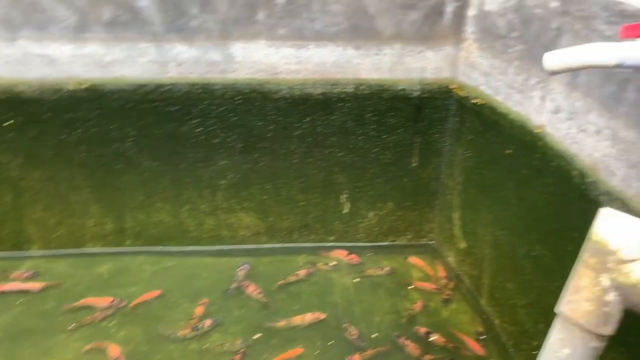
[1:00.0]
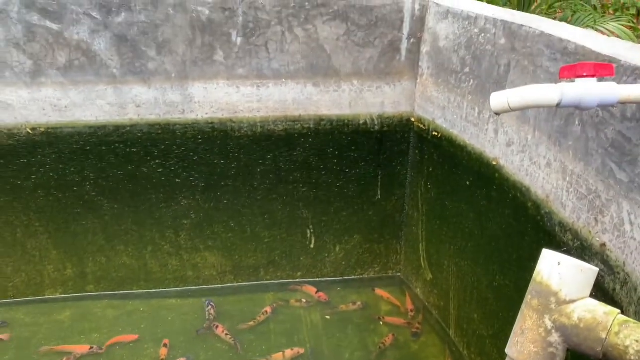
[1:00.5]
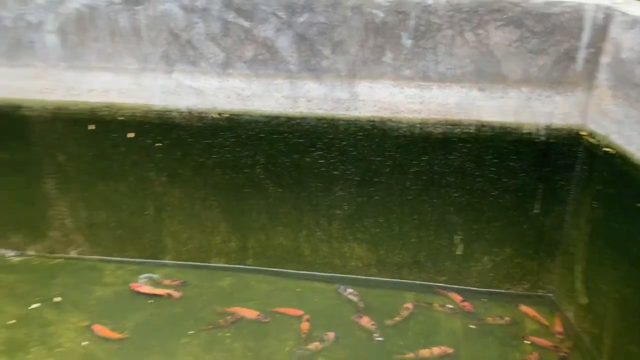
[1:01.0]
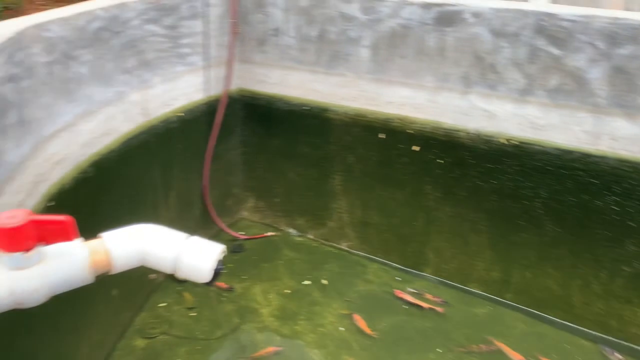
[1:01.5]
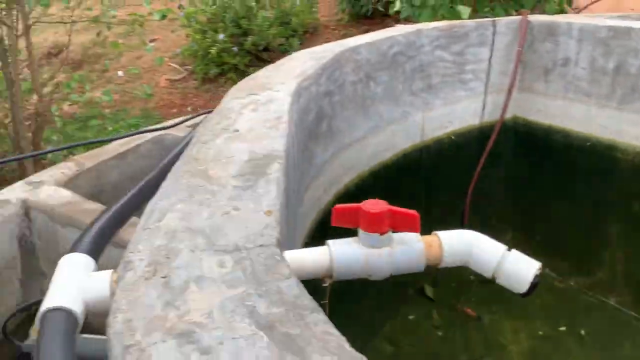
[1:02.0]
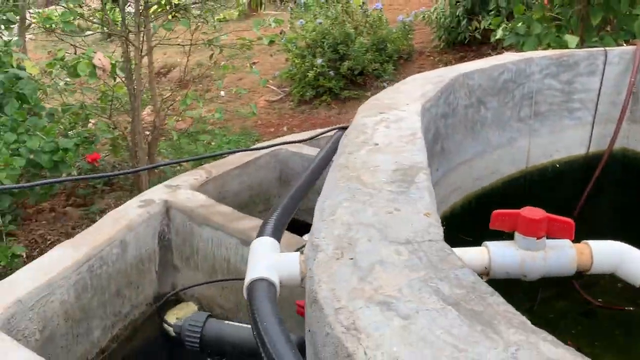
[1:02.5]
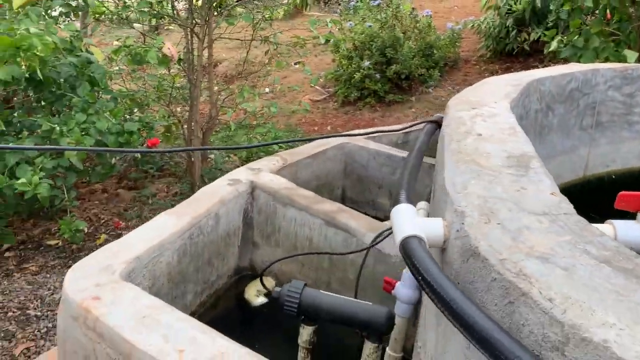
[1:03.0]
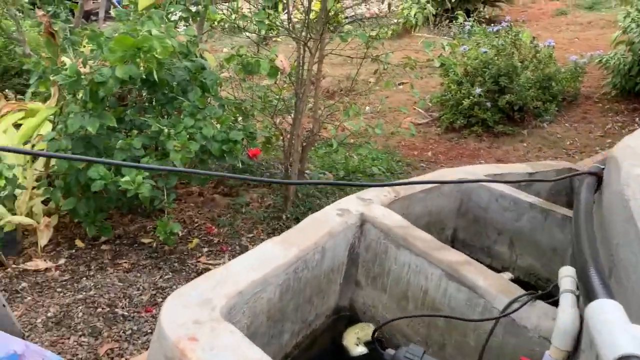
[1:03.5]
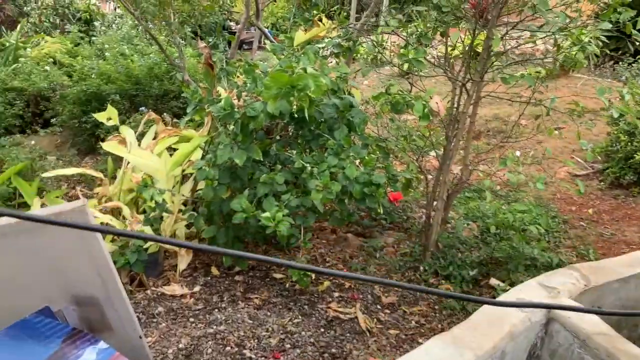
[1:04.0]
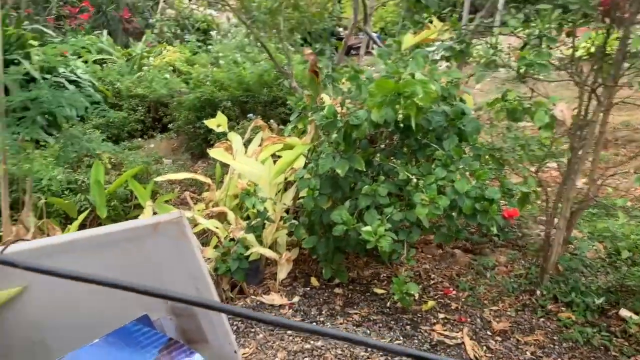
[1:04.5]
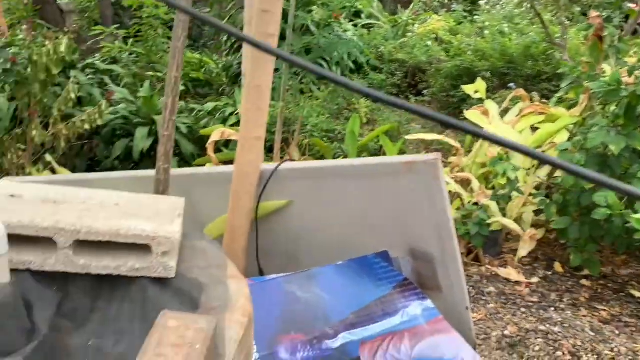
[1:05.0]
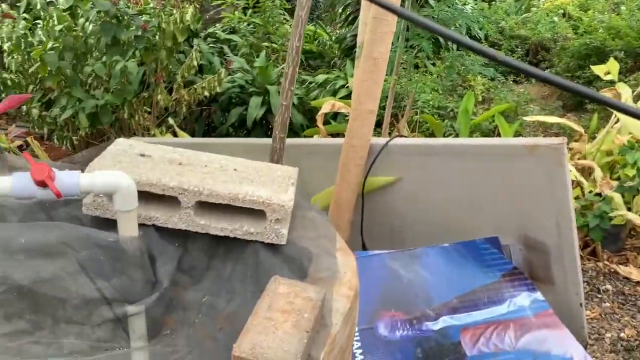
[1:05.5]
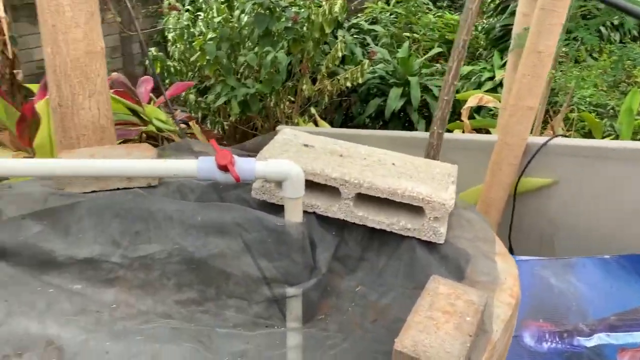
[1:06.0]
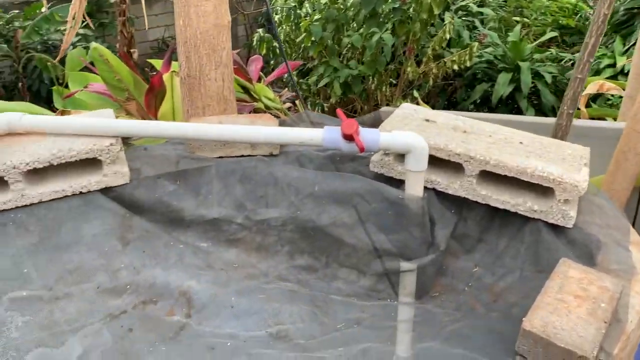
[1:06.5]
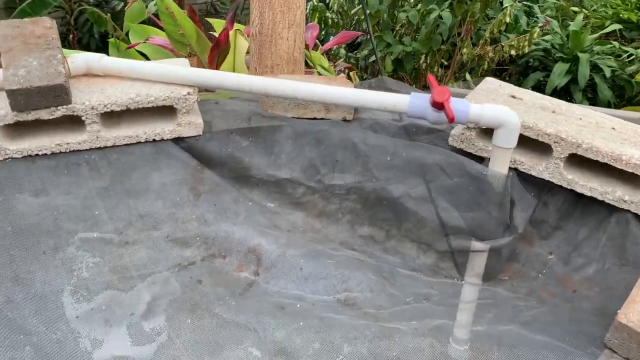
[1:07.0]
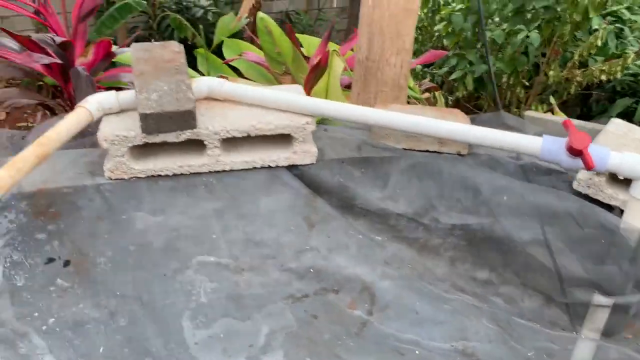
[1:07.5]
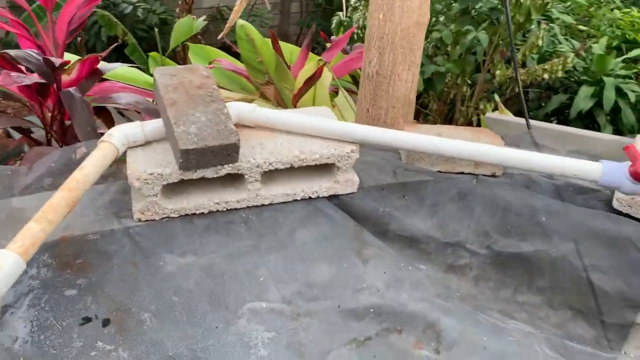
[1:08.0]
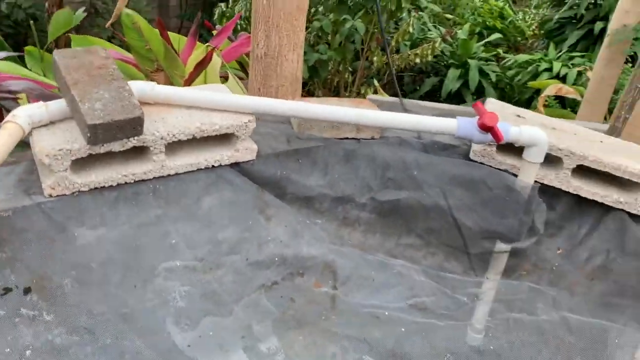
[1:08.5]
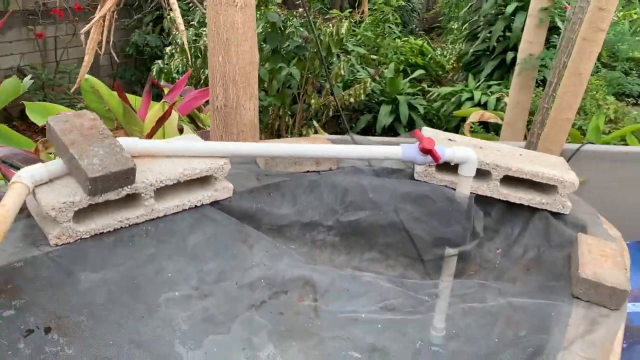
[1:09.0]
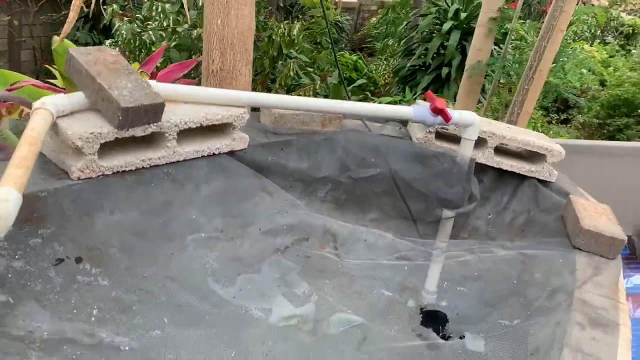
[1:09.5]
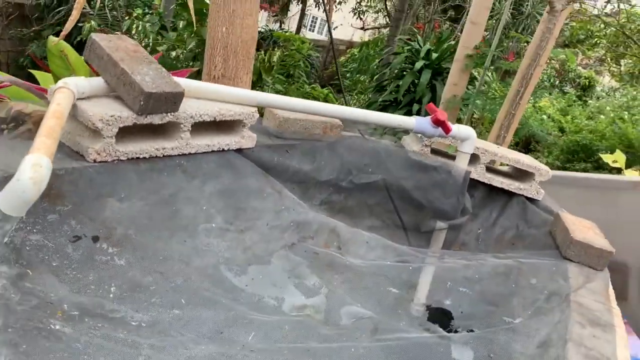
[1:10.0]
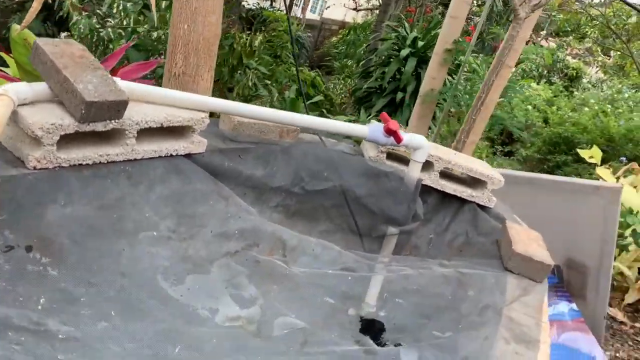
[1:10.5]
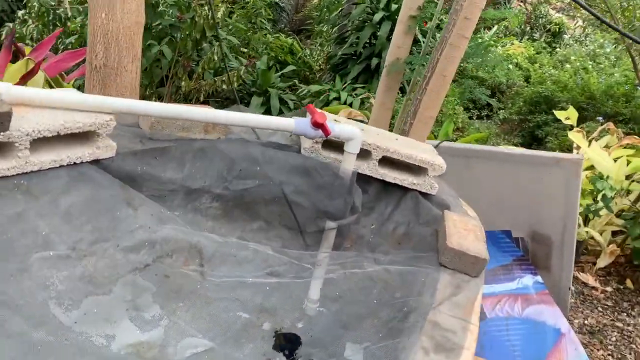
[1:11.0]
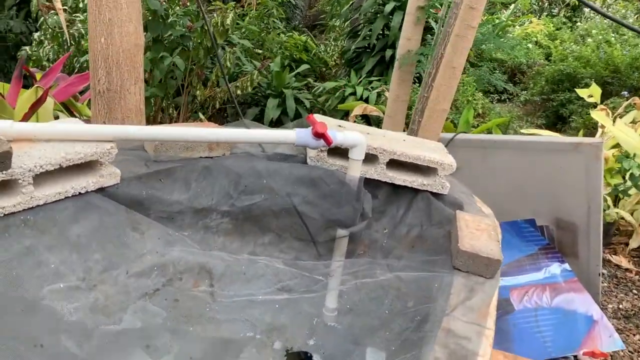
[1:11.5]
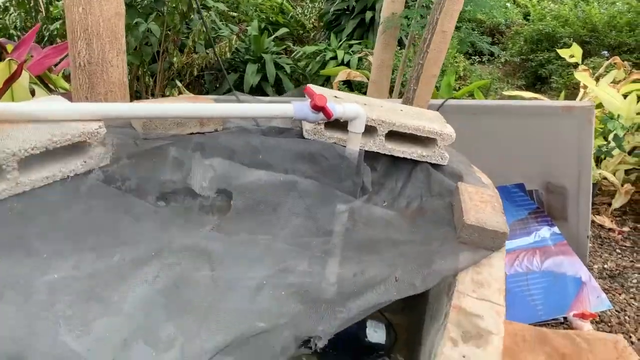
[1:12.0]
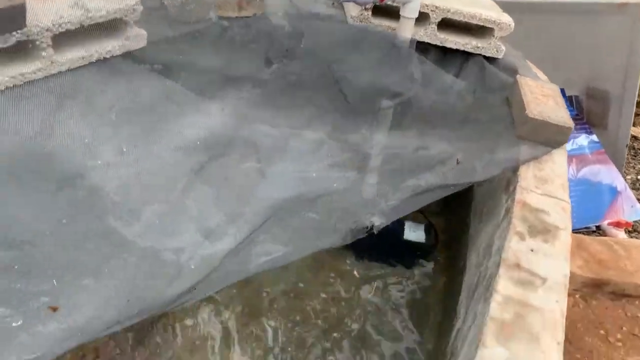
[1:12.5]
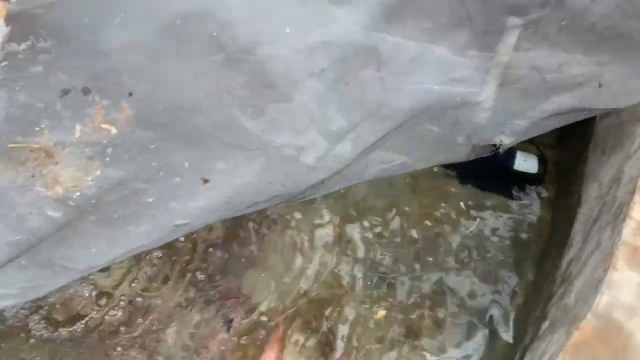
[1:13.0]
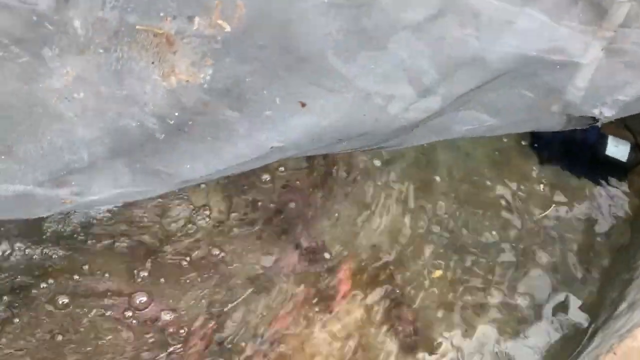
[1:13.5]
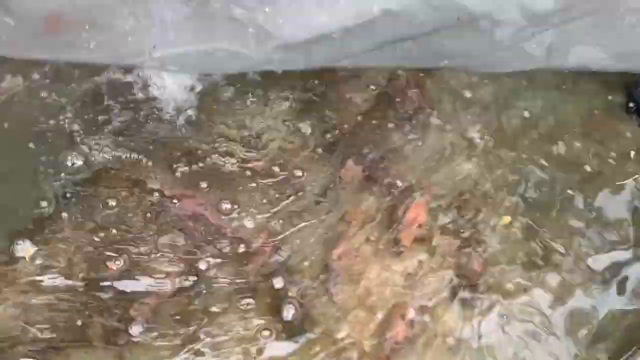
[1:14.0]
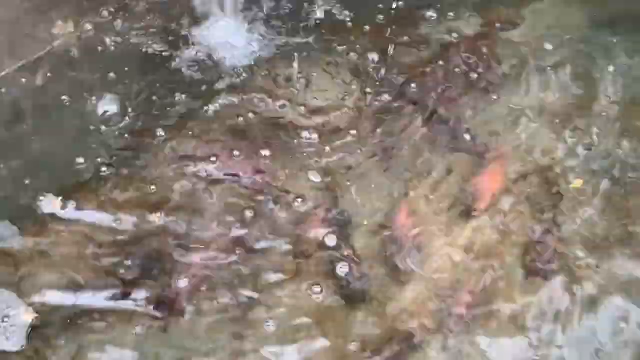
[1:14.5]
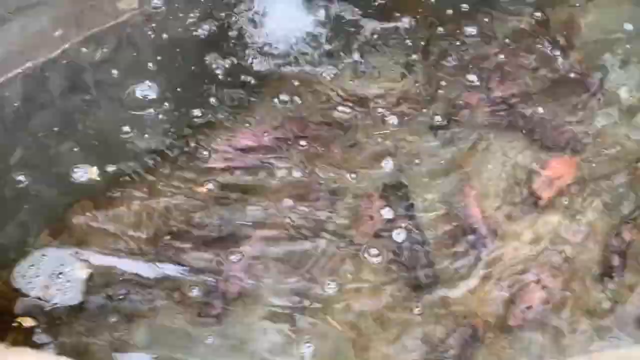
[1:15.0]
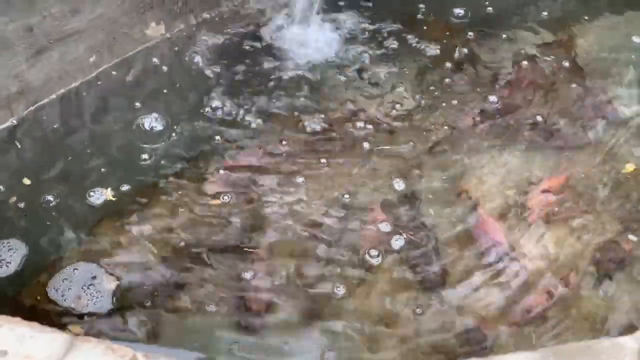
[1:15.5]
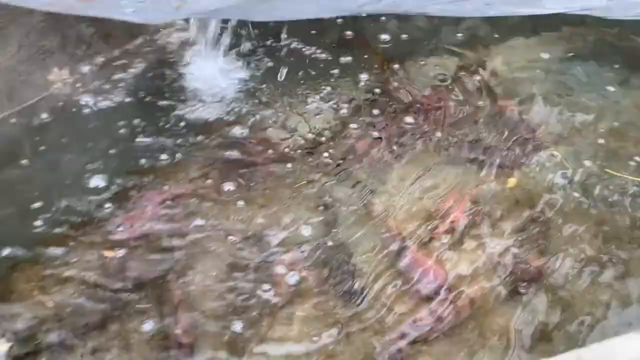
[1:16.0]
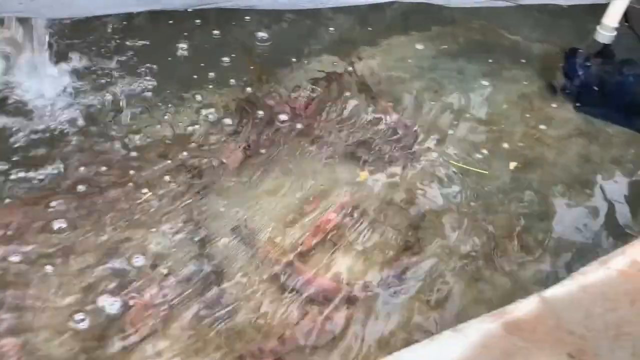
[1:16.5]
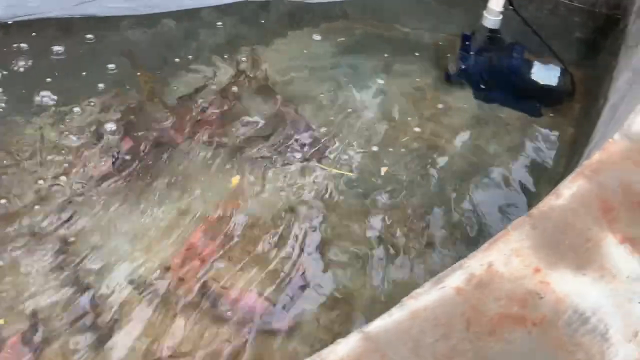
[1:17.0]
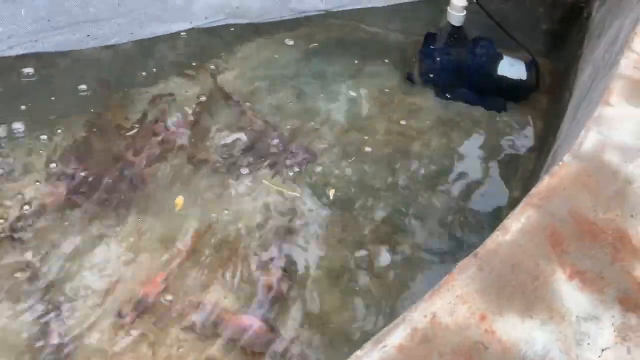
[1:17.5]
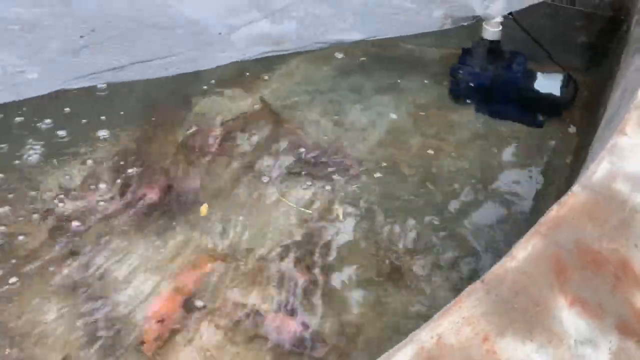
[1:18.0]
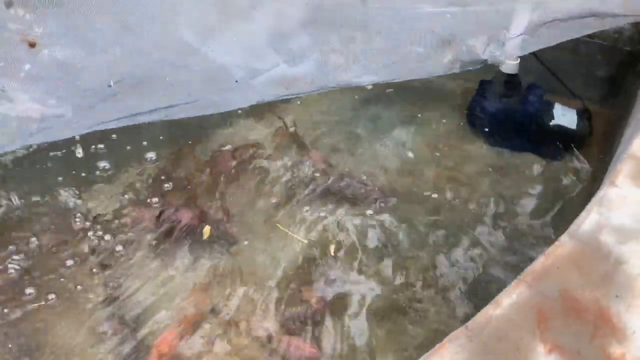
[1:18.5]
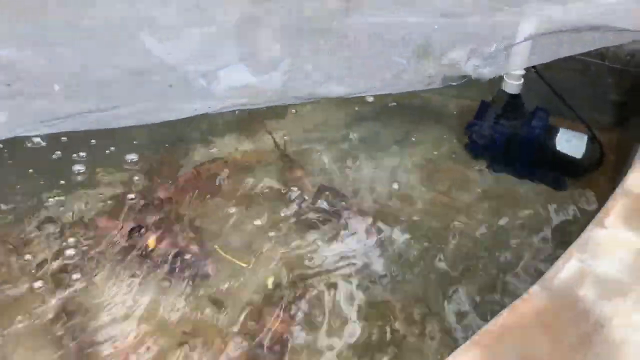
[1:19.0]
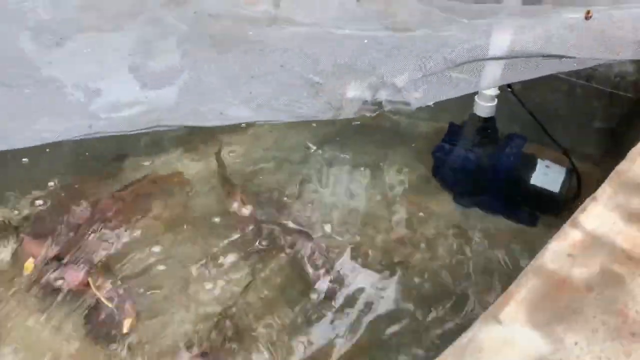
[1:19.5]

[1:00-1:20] A gray cement tank is dark green from about halfway down. In the clear water at the bottom is an orange fish. Two white pipes on the inside have red latches to shut the water off, and a black pipe runs along the outside of the tank. Outside are green trees, brown ground, green vegetation in the background, and a white cylinder and gray cylinder blocks holding up elevated white pipes. Another small cement tank holds yellow and possibly pink fish. What looks like a blue pump on the right side appears to supply water to the cement tanks. On the outside of the cement tanks is a black hose held in place by silver brackets.